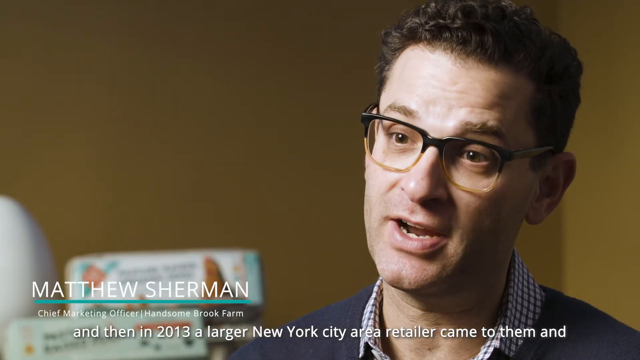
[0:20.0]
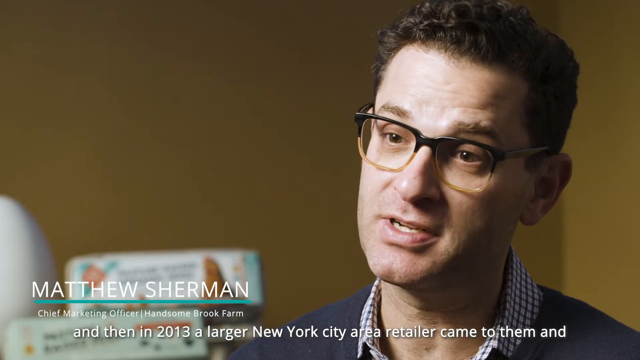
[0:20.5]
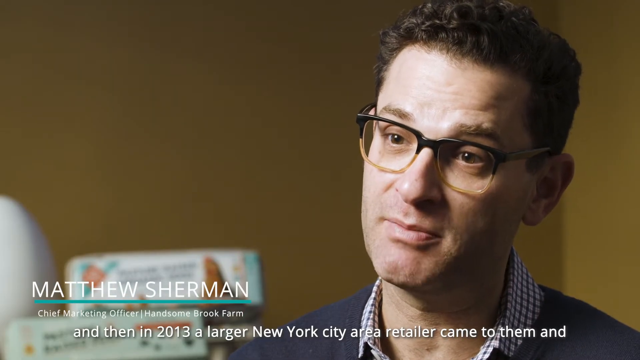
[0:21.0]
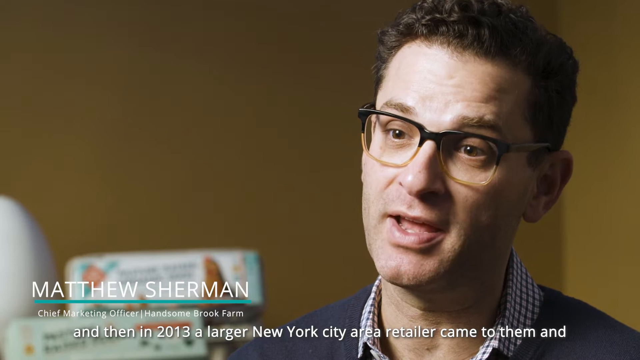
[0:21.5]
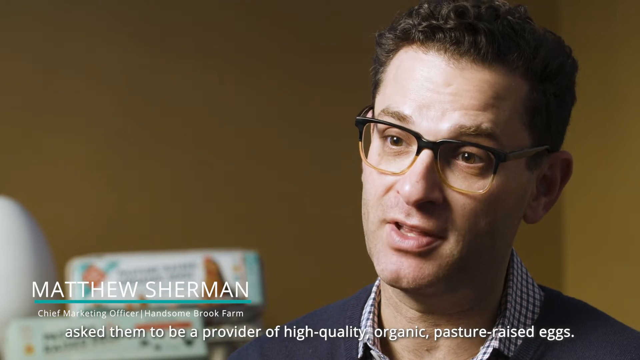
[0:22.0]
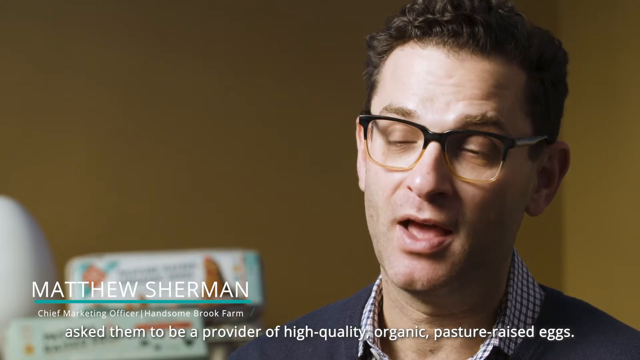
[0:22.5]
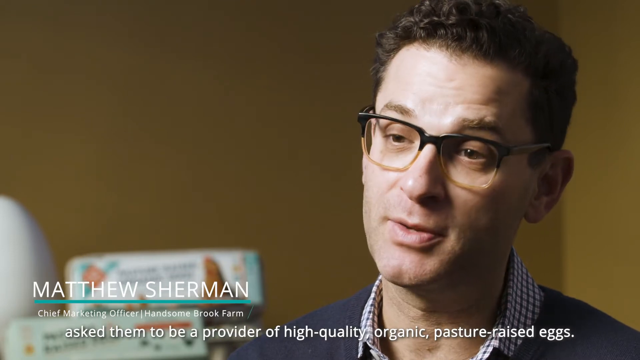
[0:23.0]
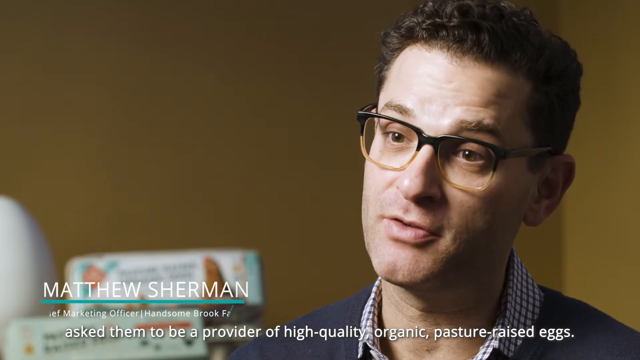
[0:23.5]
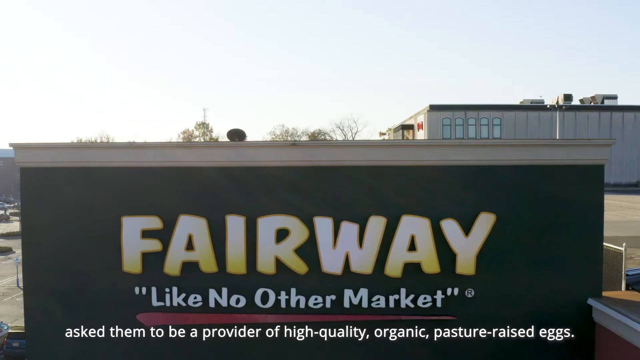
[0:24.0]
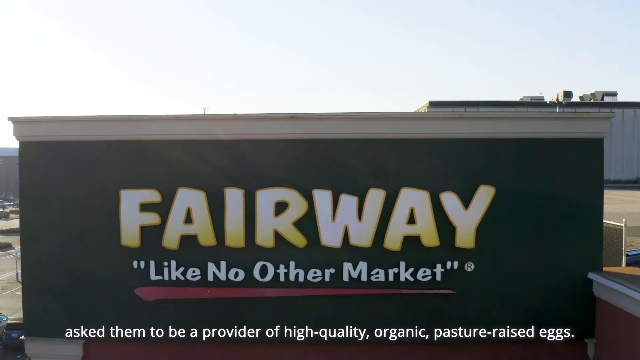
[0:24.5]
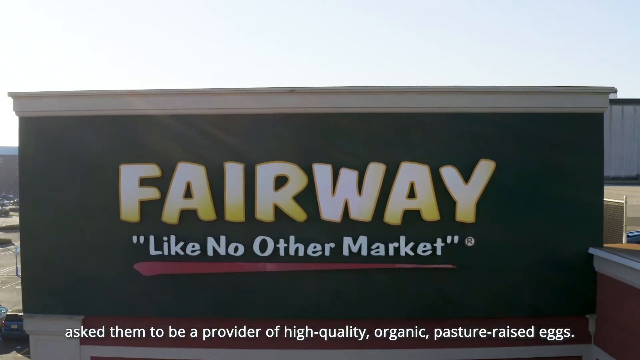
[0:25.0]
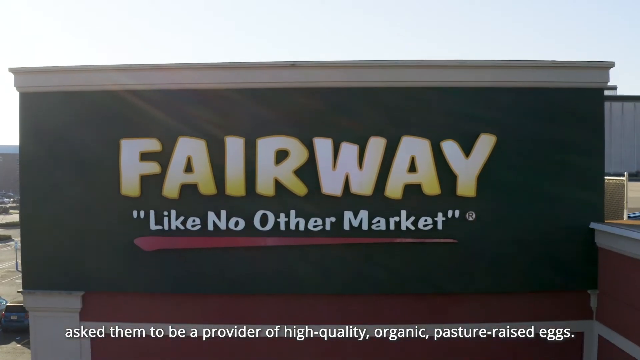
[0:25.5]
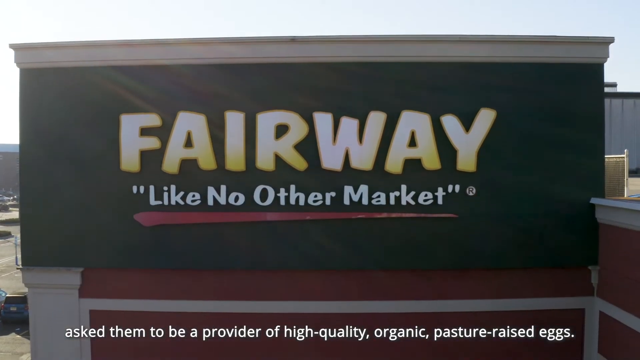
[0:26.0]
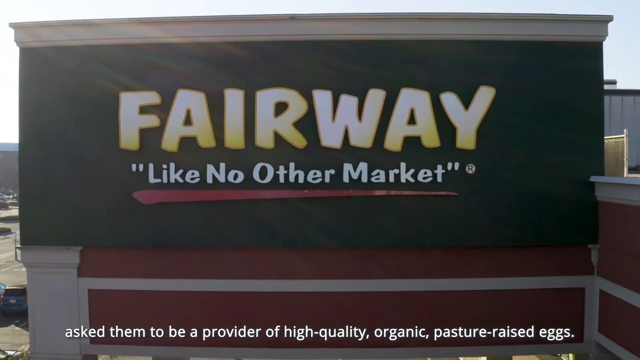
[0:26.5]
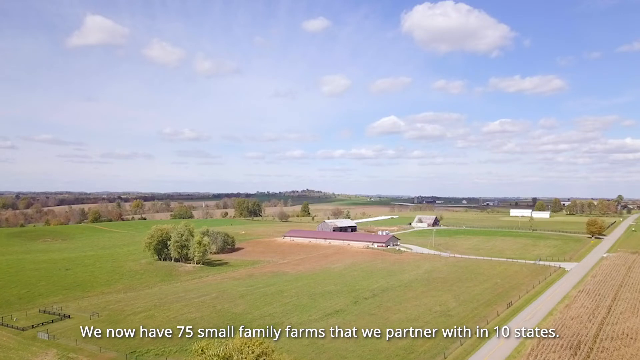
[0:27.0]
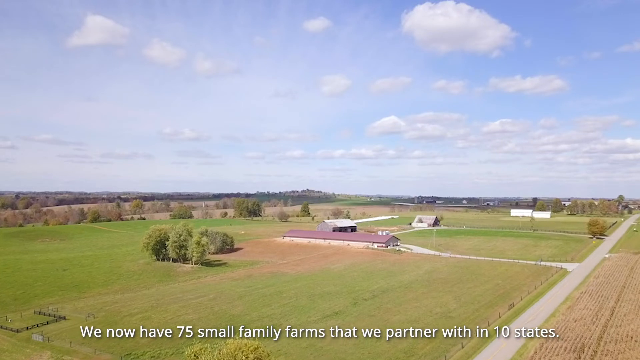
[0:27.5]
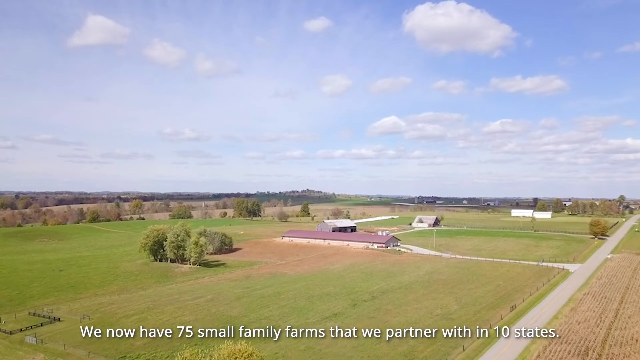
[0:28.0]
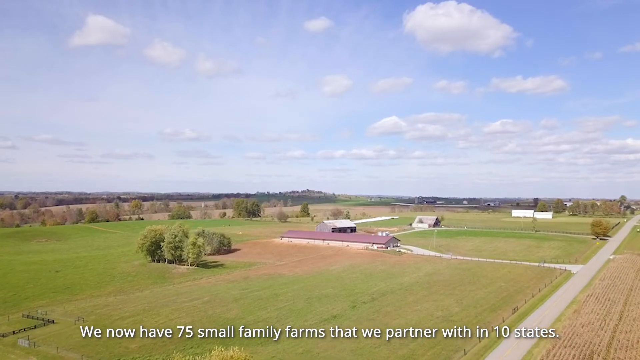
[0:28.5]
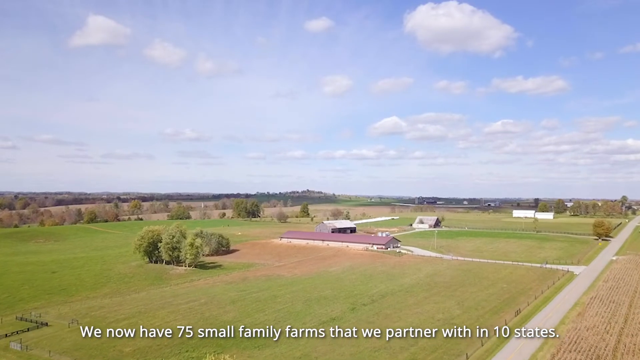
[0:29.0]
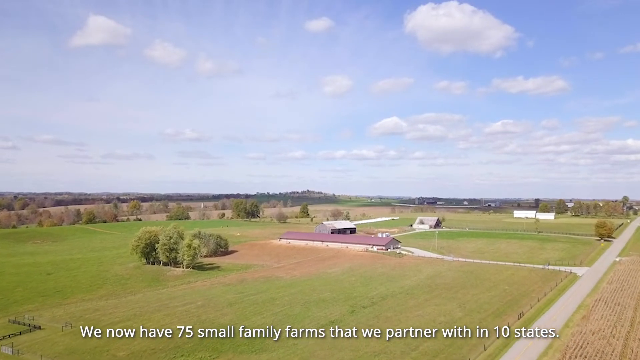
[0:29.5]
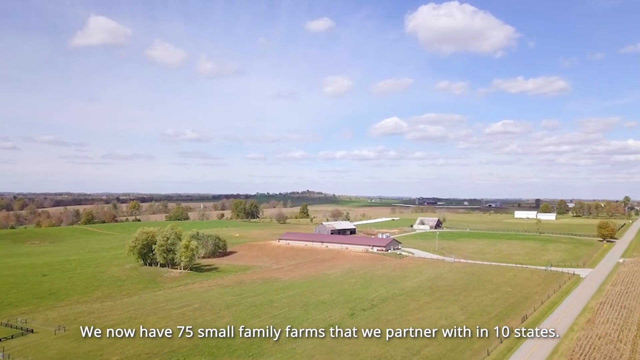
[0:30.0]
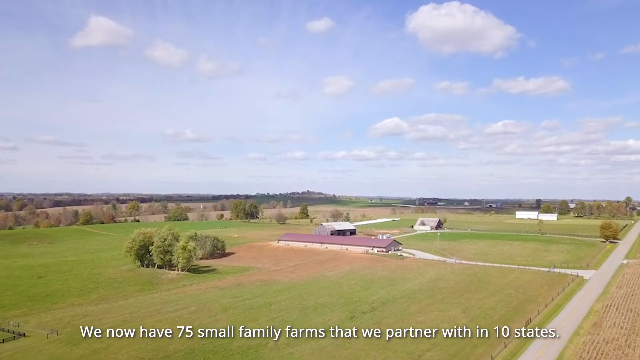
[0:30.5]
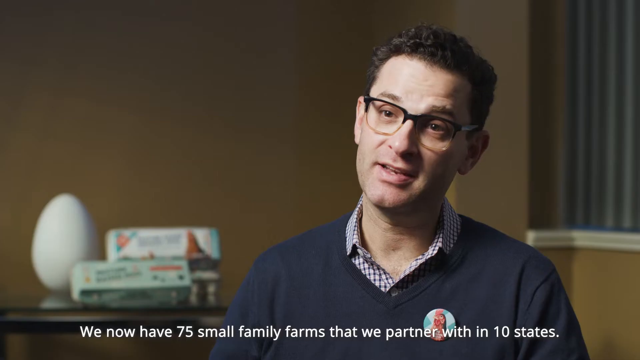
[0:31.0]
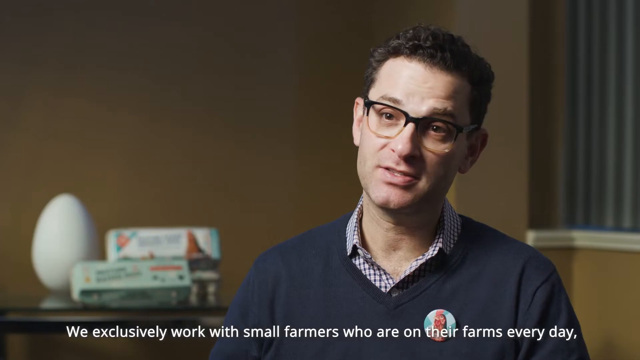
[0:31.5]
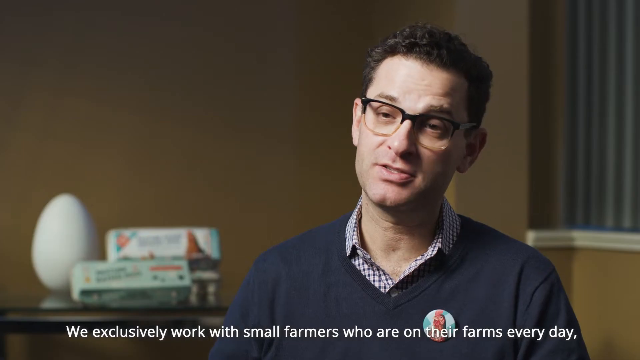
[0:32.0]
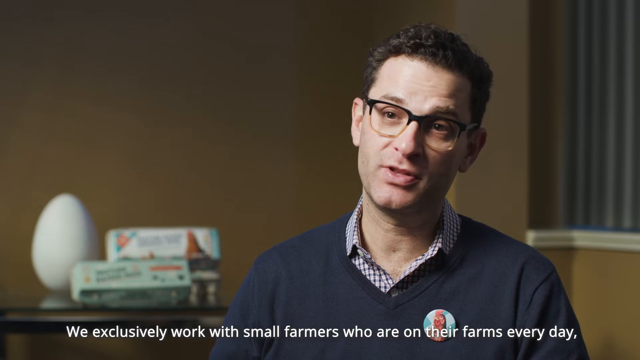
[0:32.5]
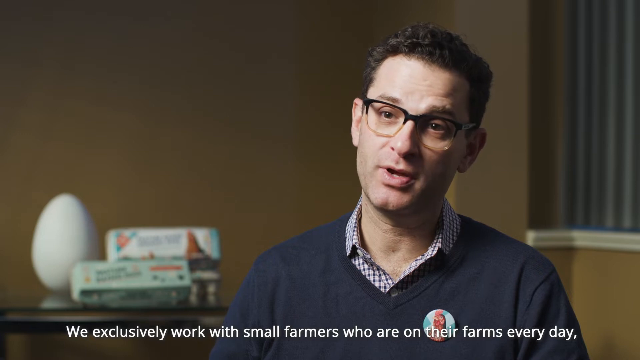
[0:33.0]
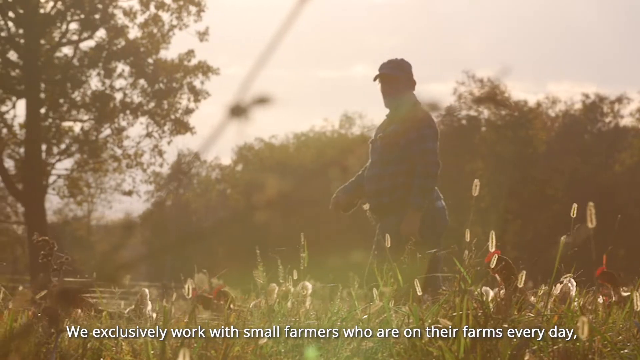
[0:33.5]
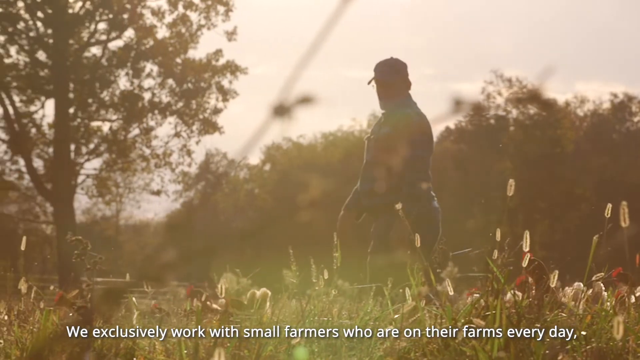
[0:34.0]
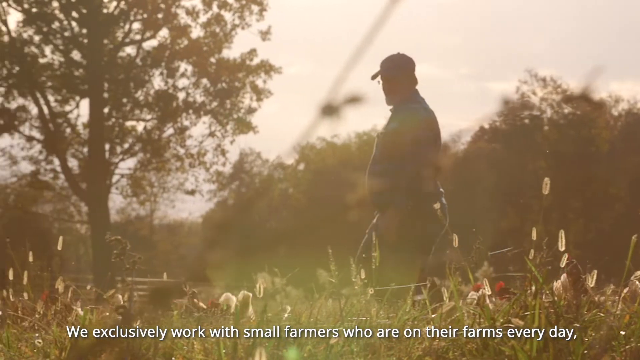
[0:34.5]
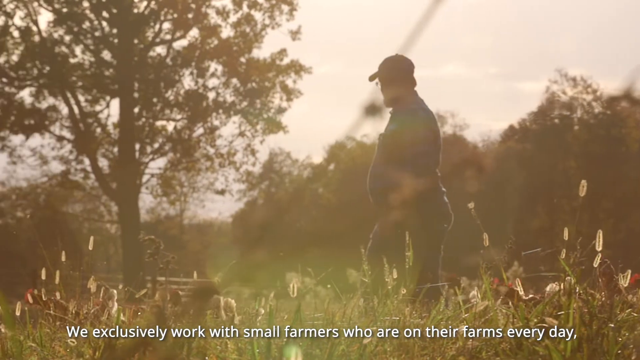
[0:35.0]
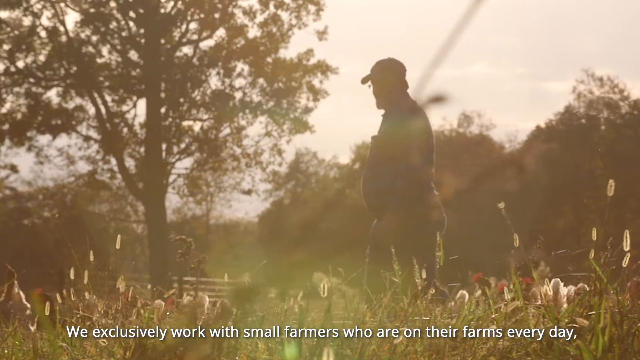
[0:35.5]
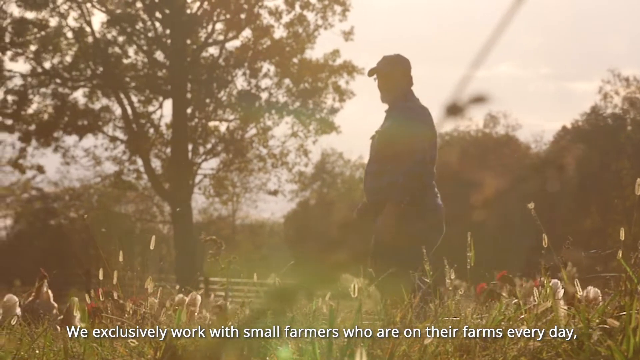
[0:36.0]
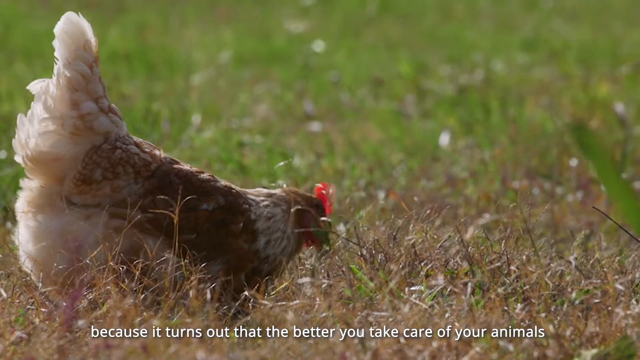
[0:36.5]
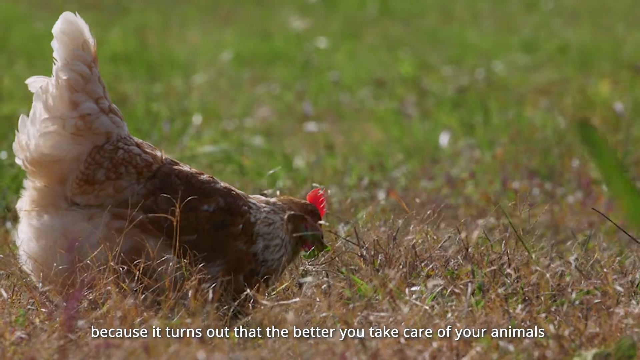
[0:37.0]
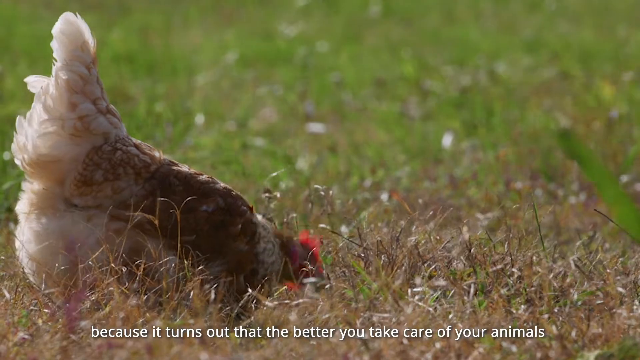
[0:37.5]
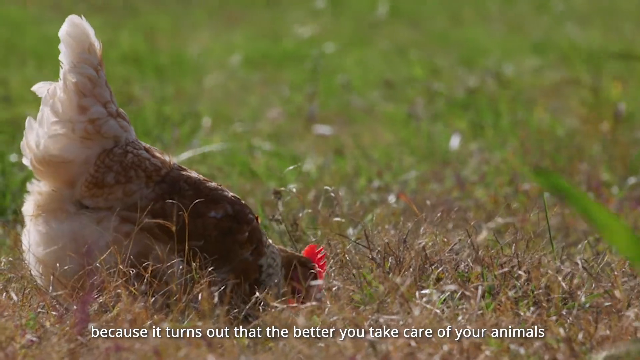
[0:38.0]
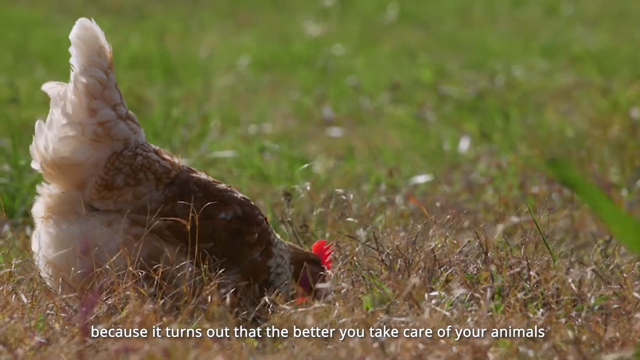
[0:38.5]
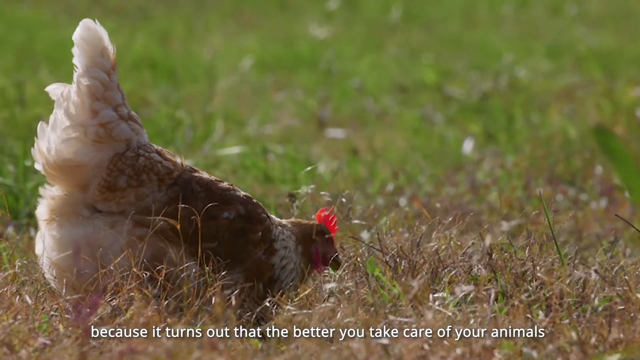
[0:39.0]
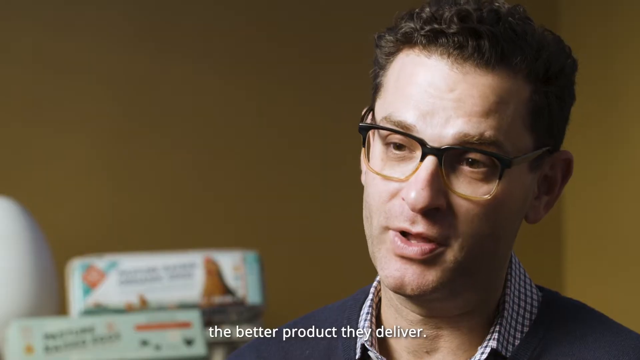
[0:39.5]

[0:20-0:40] Matthew Sherman continues speaking to an interviewer sitting just to the left of the camera. Subtitles at the bottom of the frame read: "to be a provider of high-quality organic pasture-raised eggs. We now have 75 small family farms that we partner with in 10 states. We exclusively work with small farmers who are on their farms every day. because it turns out that the better you take care of your animals... the better product they deliver." After the interview shot, the camera tilts down on a building with a sign that says "Fairway, like no other market." A drone shot of a large area of farmland follows, then the interview, then a farmer walking through a meadow with chickens running around at his feet, and finally Matthew Sherman's interview once more.